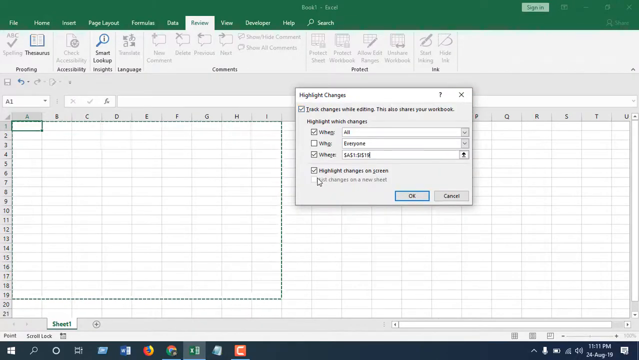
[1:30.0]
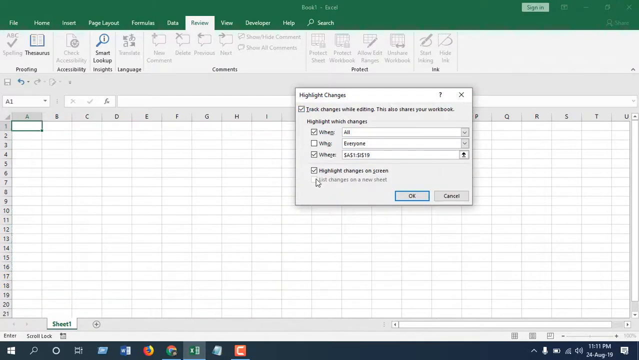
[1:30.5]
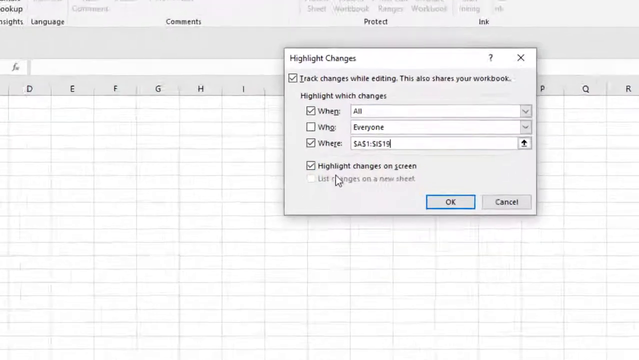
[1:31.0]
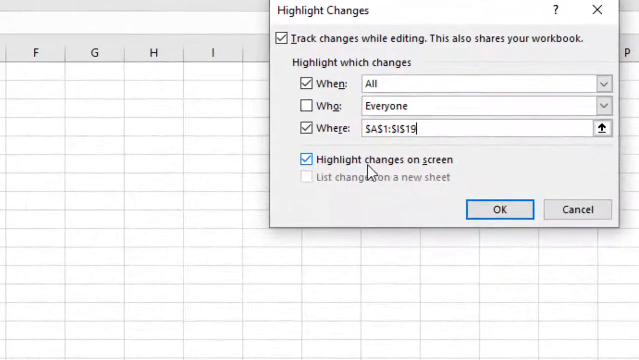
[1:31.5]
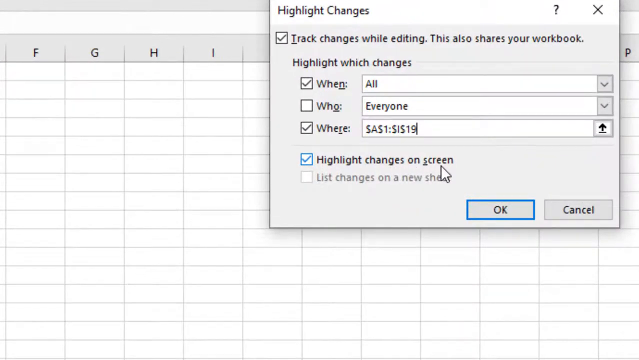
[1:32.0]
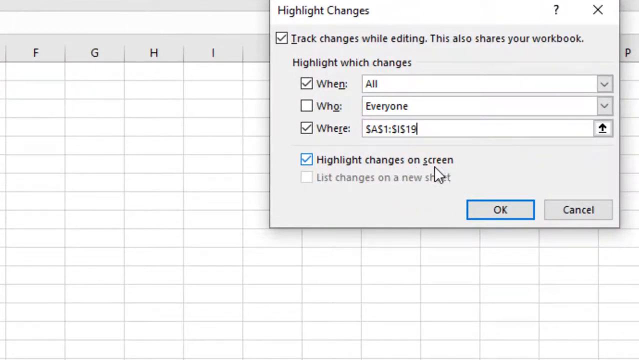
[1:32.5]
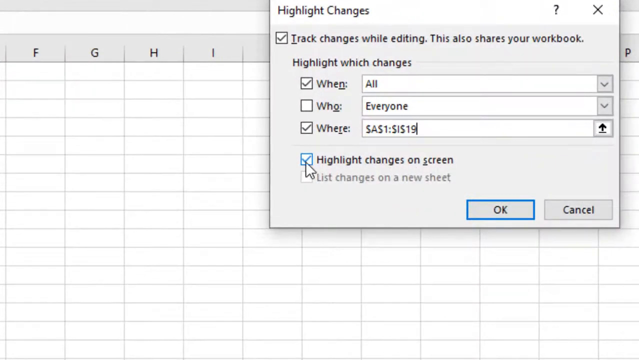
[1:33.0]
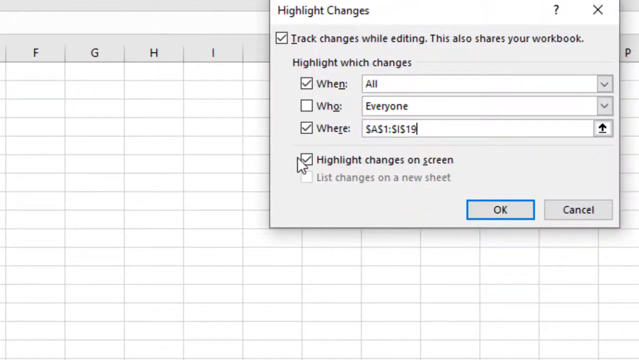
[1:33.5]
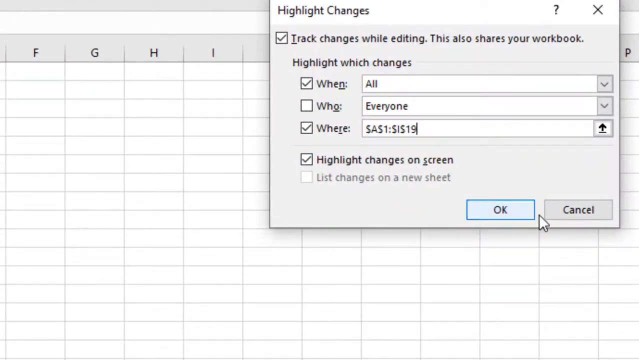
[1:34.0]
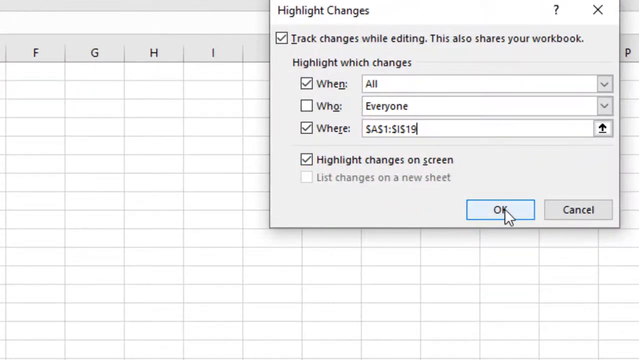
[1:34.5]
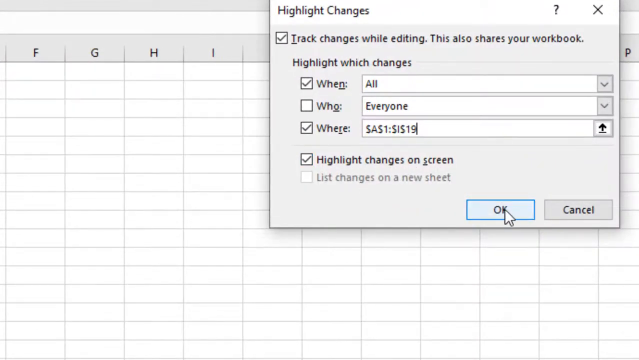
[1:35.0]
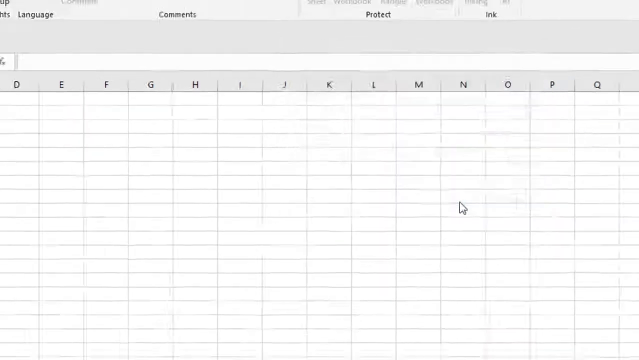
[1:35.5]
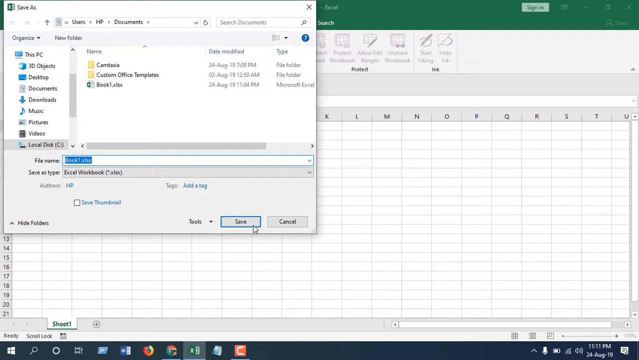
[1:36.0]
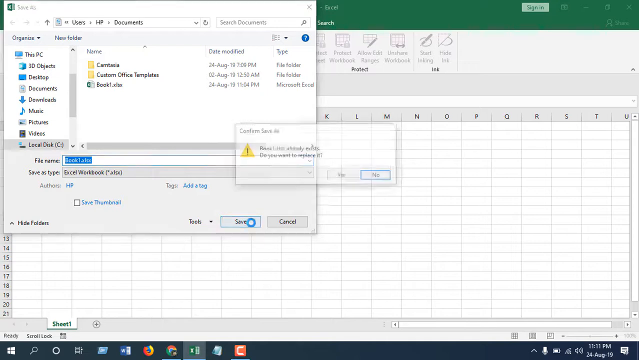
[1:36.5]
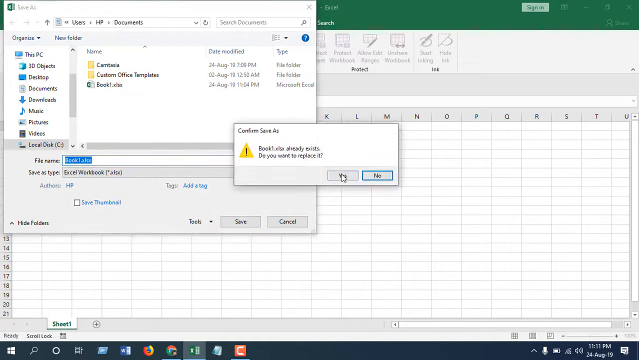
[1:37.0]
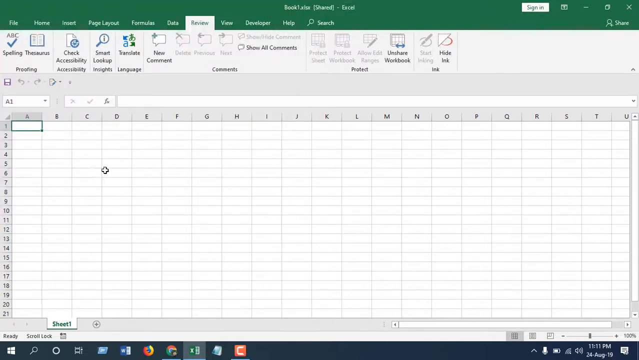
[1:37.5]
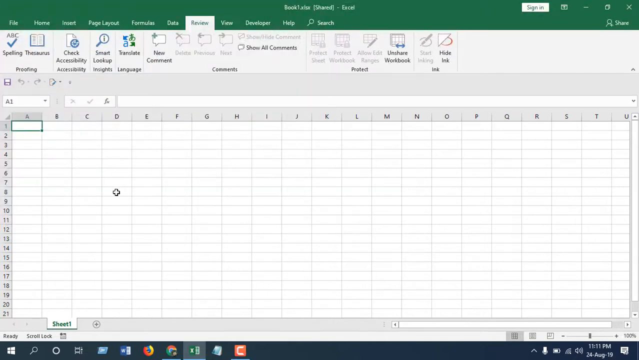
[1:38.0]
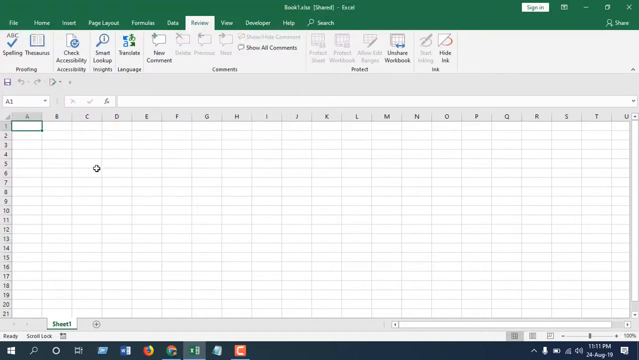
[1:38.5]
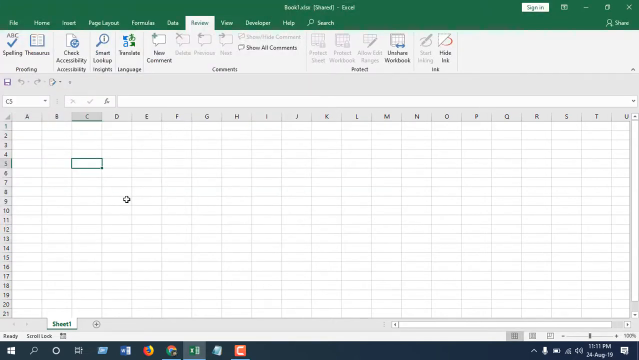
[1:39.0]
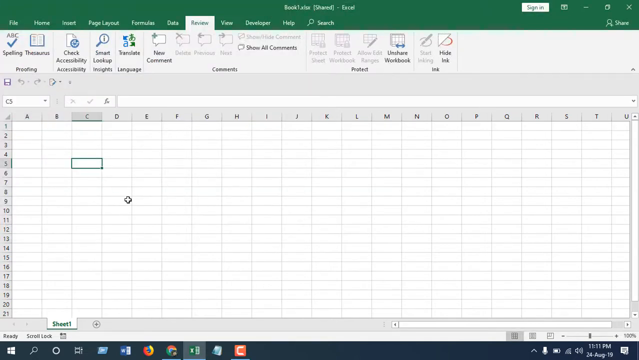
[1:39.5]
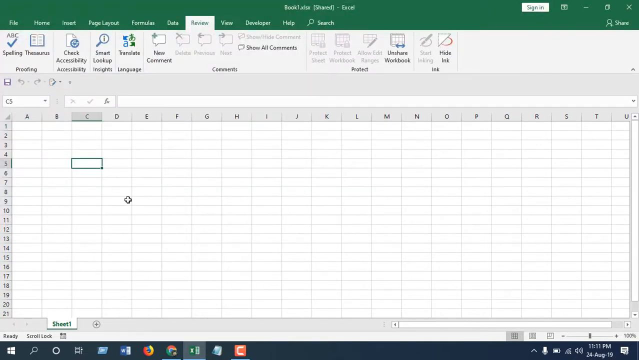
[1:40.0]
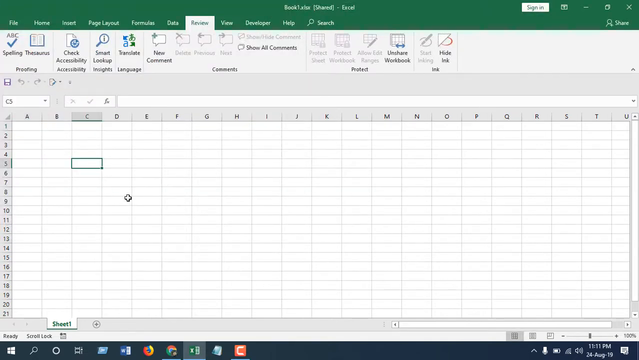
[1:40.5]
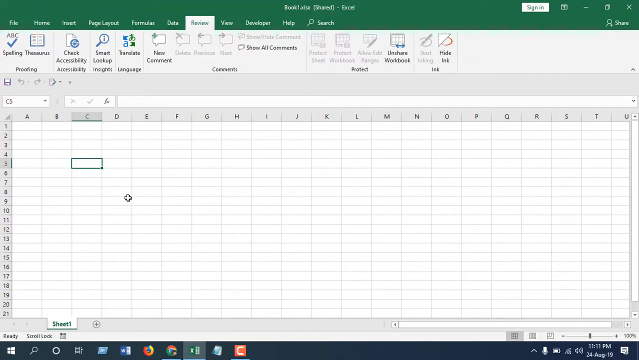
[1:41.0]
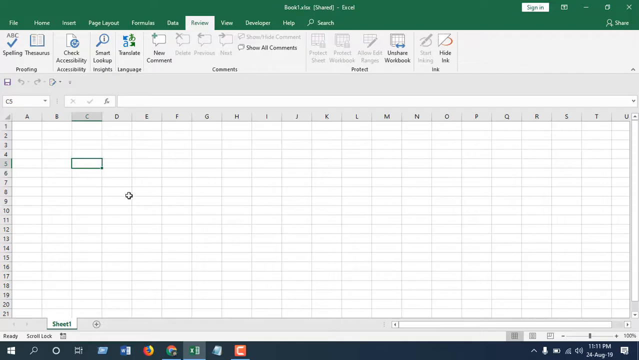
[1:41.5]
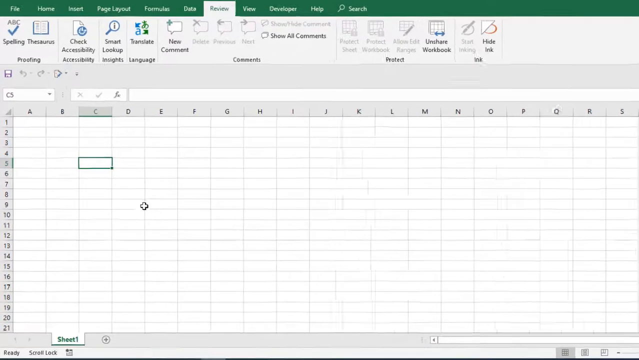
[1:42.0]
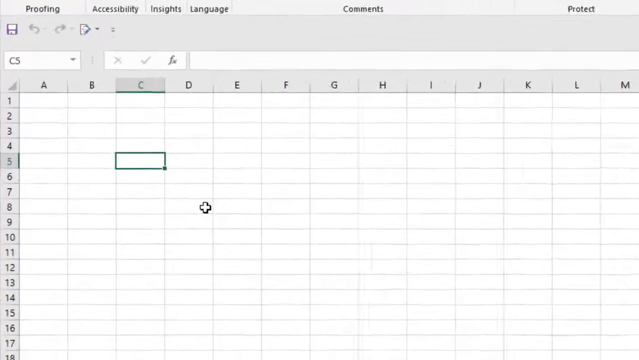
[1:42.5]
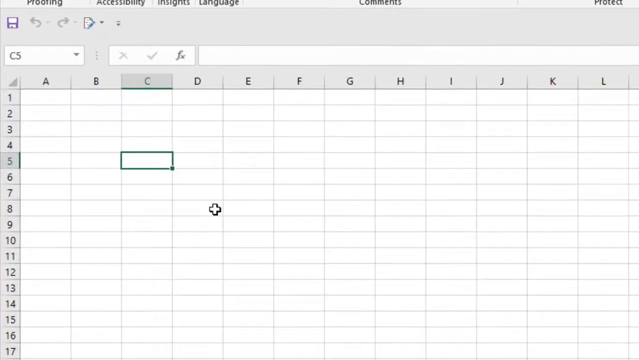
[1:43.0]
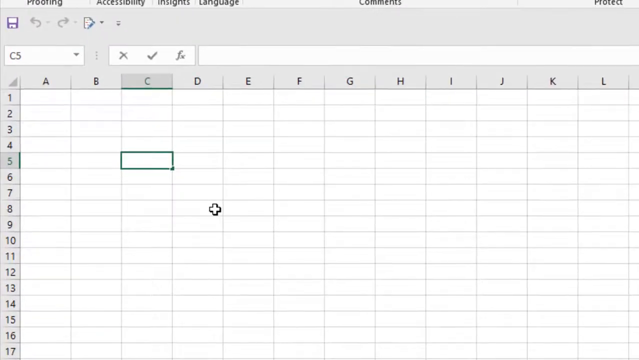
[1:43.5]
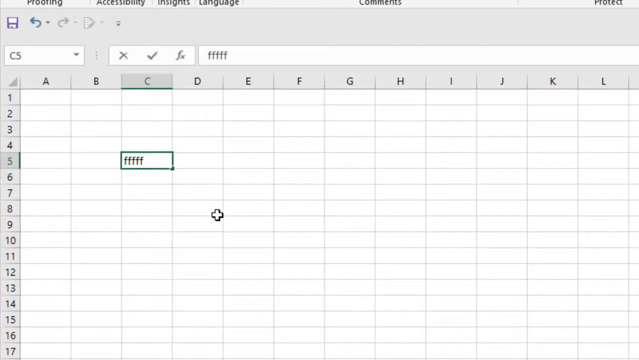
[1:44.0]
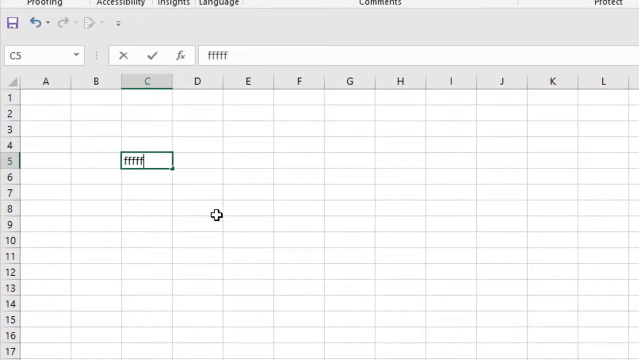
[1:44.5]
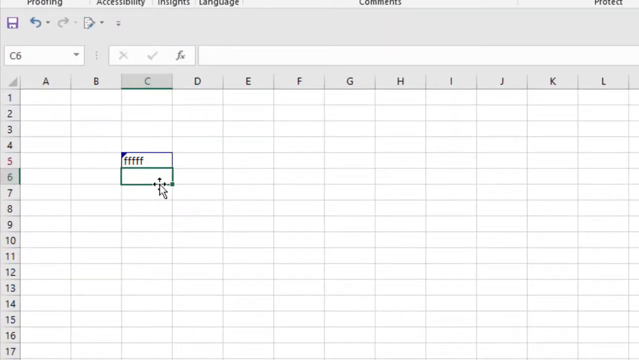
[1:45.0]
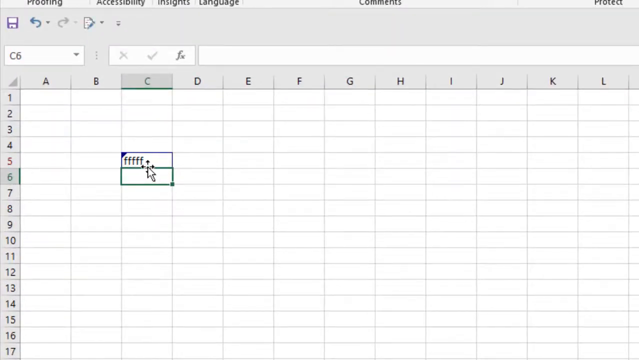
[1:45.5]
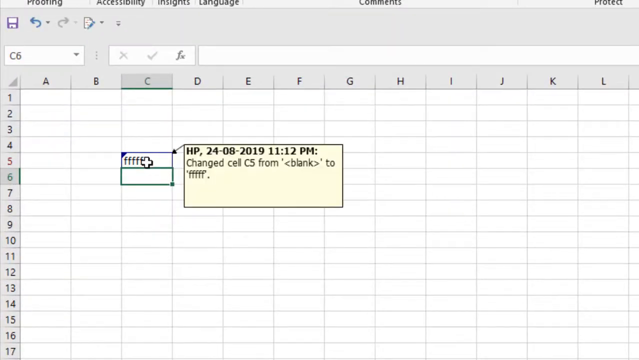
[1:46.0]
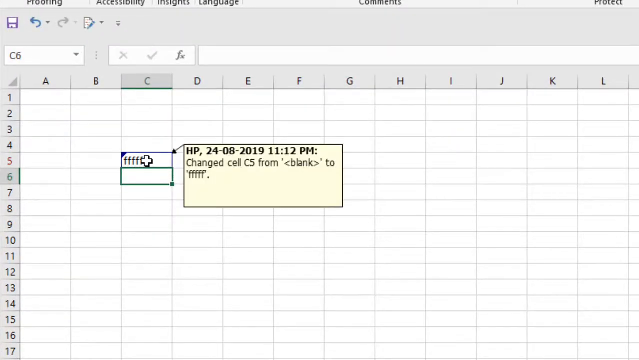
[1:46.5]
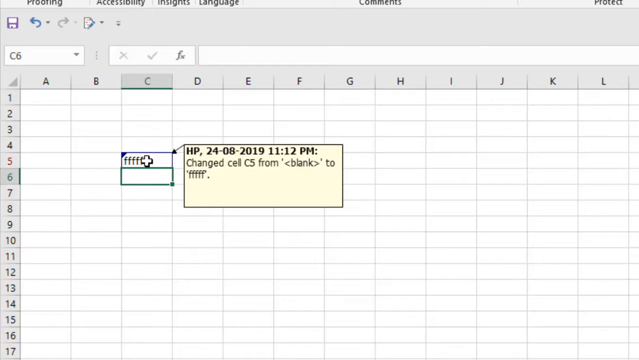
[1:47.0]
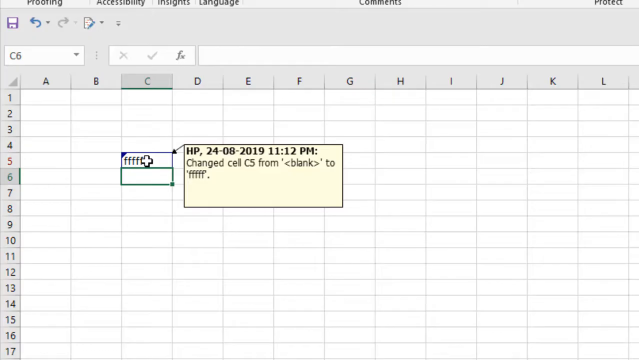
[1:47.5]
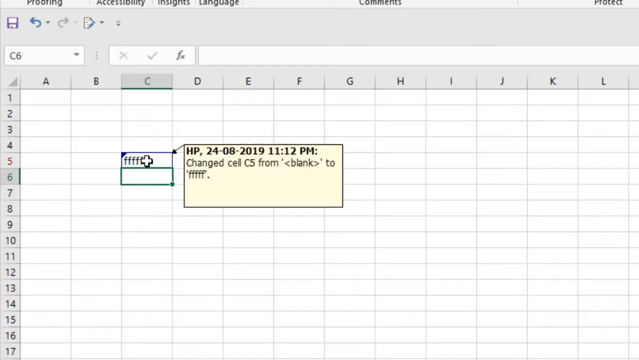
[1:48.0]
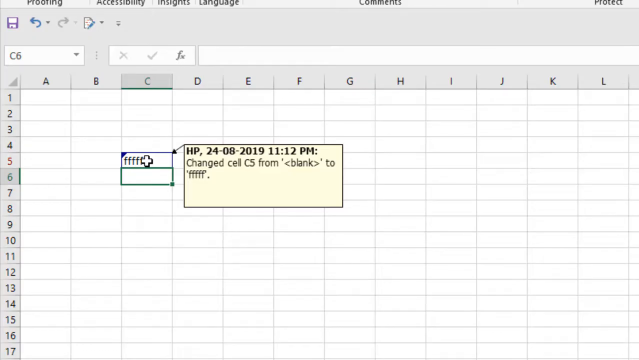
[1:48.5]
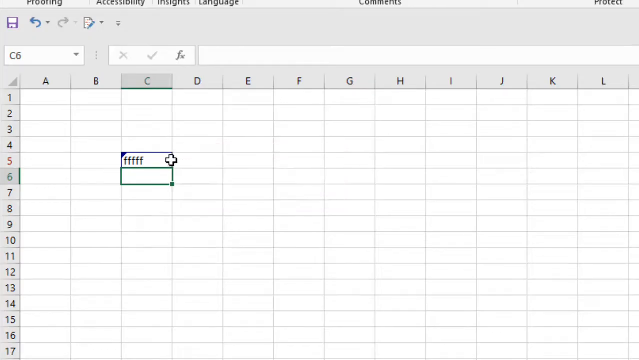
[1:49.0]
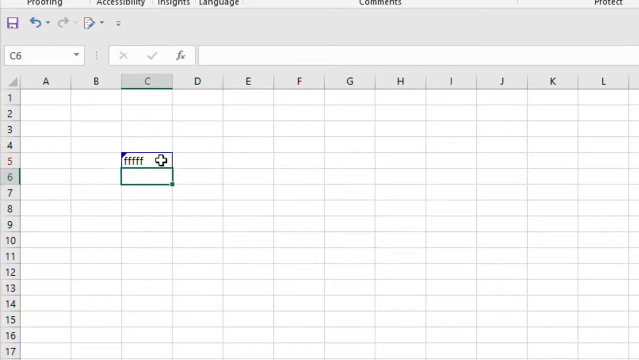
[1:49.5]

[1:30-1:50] An Excel sheet shows many empty cells with a very large green dashed-line box. A settings box for Highlight Changes is open, with "Track changes while editing. This also shares your workbook" enabled. Highlight which changes shows When, Who and Where, with the When and Where boxes enabled, and the setting at the bottom, "Highlight changes on screen", is also enabled. The user moves the mouse over Highlight changes on screen, then clicks OK, which opens a Save As box showing the location Users > HP > Documents. The user clicks Save, and a confirmation box titled "Confirm Save As" reads "Book1.xlsx already exists. Do you want to replace it?" The user clicks Yes and returns to Excel's main screen. The user clicks some cells and types FFFFF into cell C5. Hovering over it brings up a yellow box with text reading "HP, 24-08-2019, 11:12 PM. Change cell C5 from blank to FFFFF".